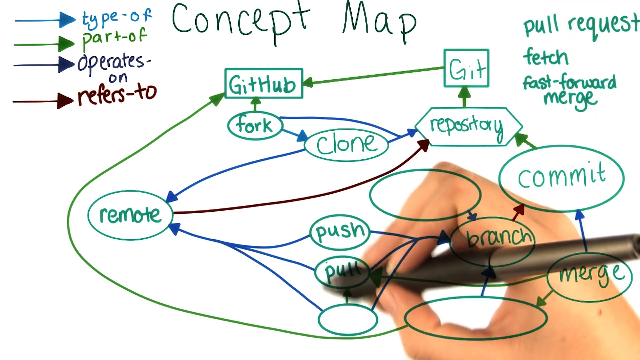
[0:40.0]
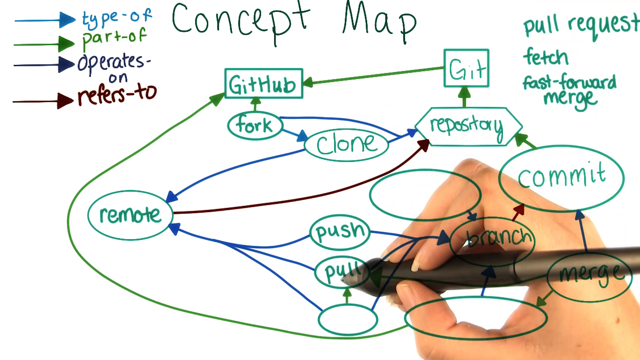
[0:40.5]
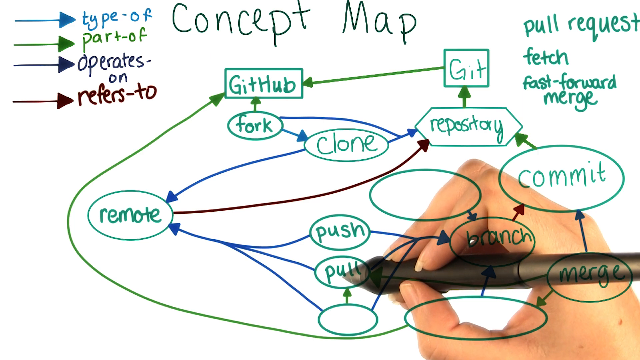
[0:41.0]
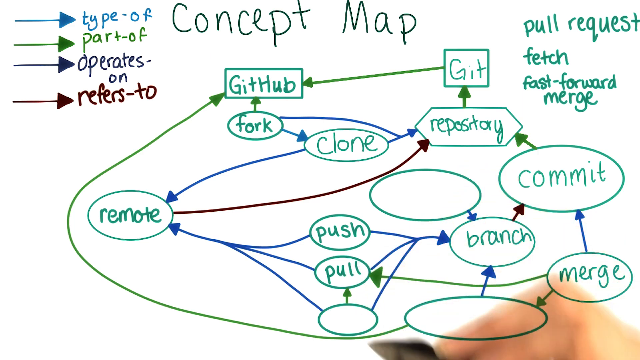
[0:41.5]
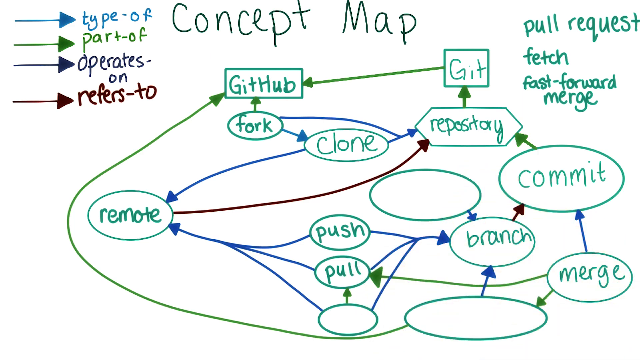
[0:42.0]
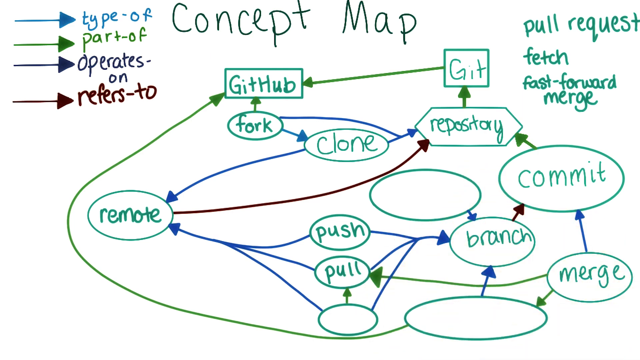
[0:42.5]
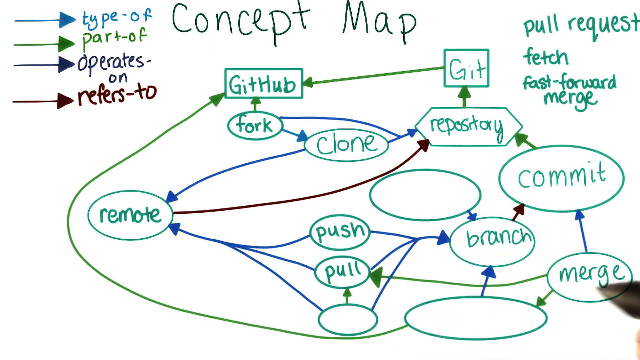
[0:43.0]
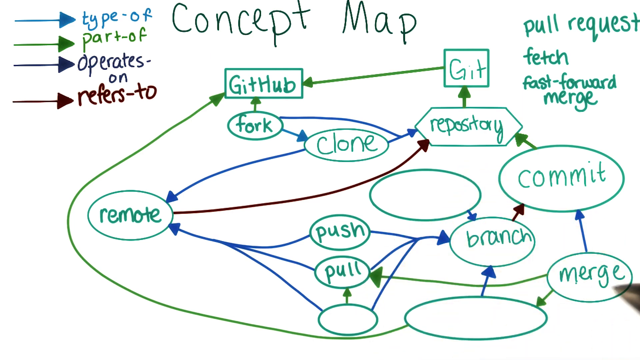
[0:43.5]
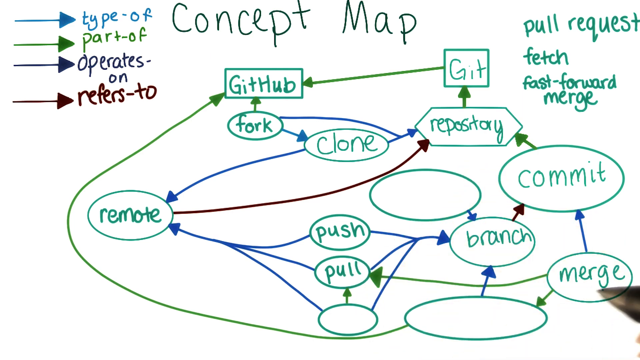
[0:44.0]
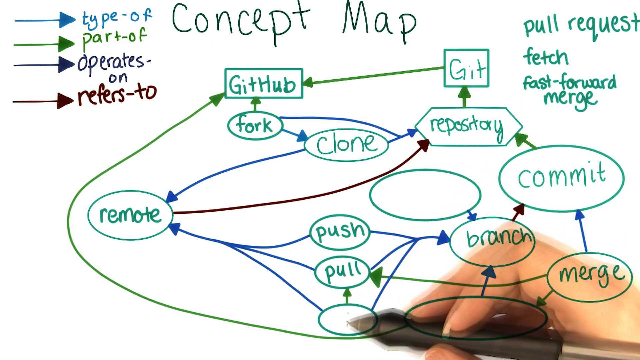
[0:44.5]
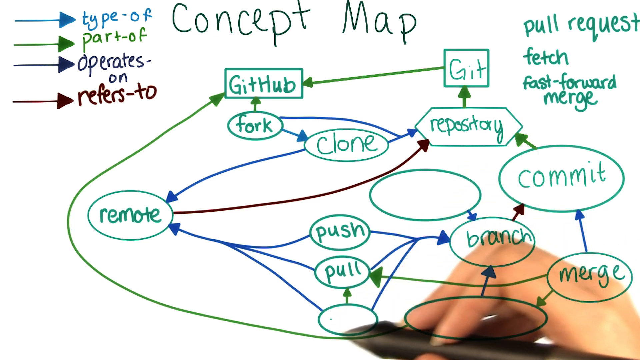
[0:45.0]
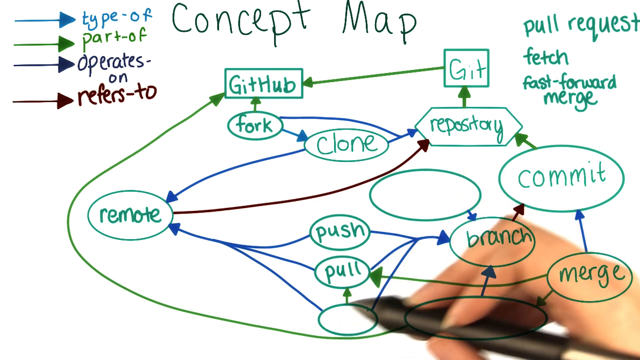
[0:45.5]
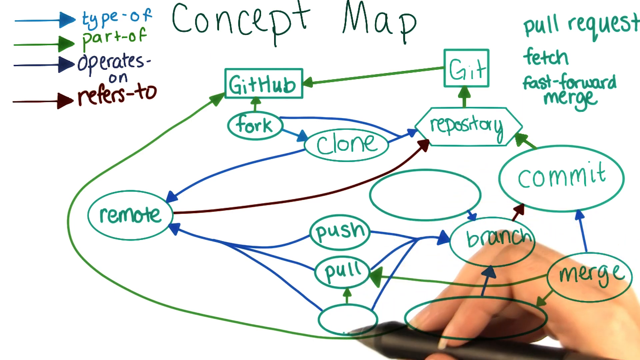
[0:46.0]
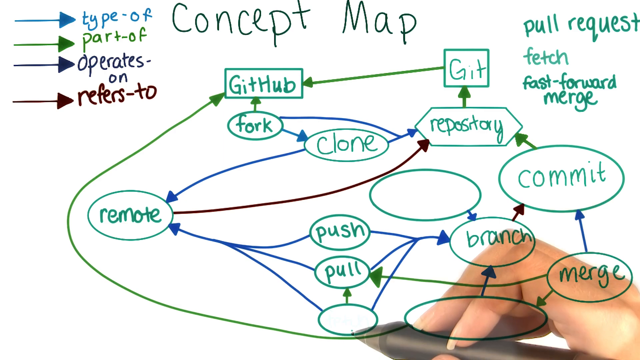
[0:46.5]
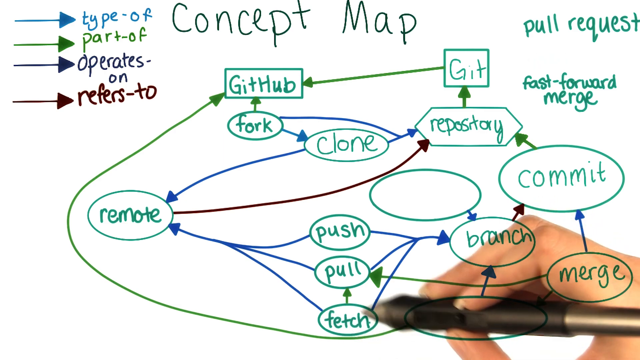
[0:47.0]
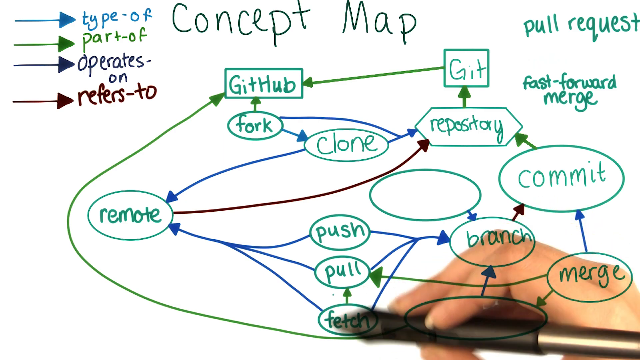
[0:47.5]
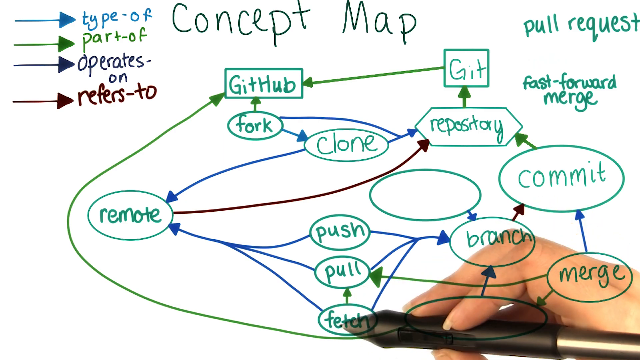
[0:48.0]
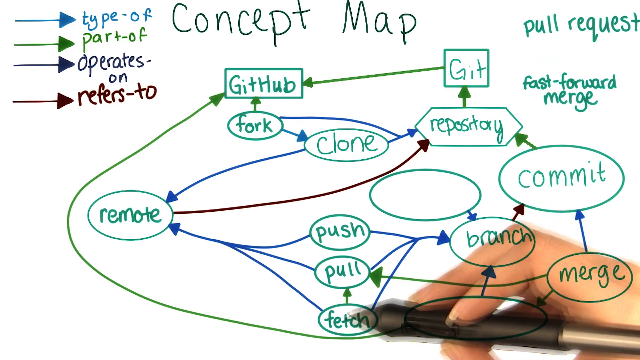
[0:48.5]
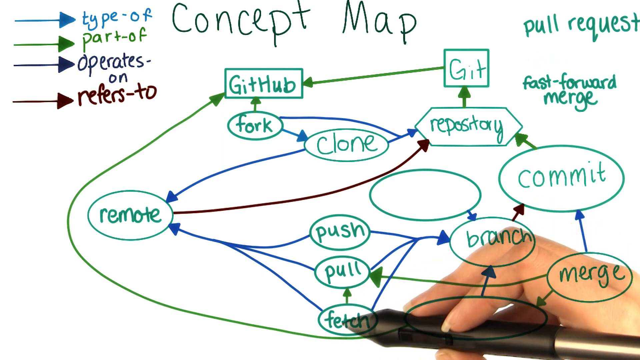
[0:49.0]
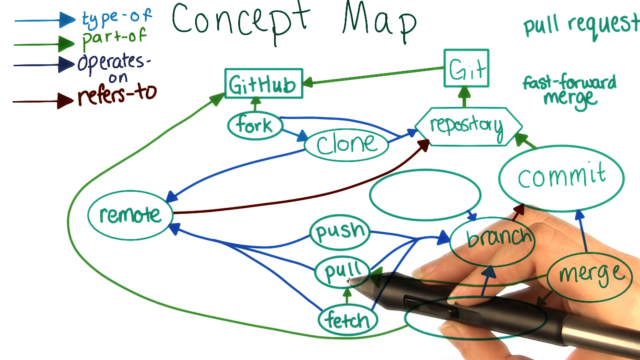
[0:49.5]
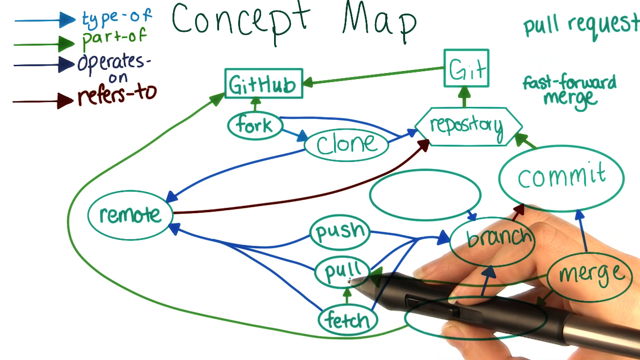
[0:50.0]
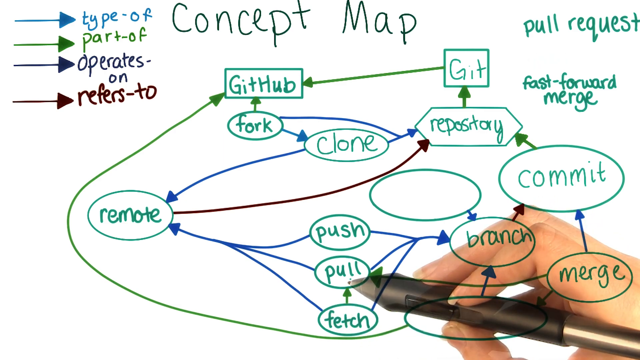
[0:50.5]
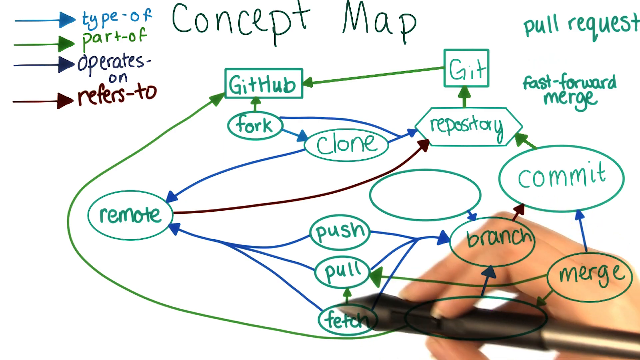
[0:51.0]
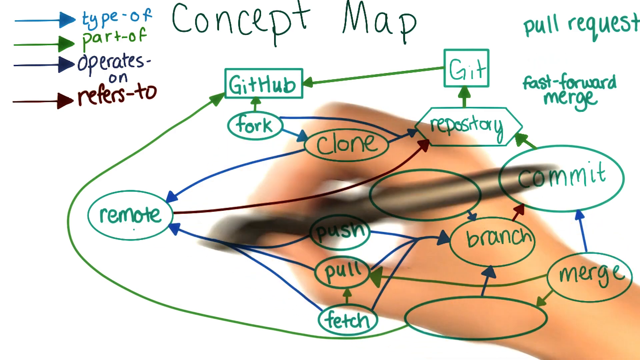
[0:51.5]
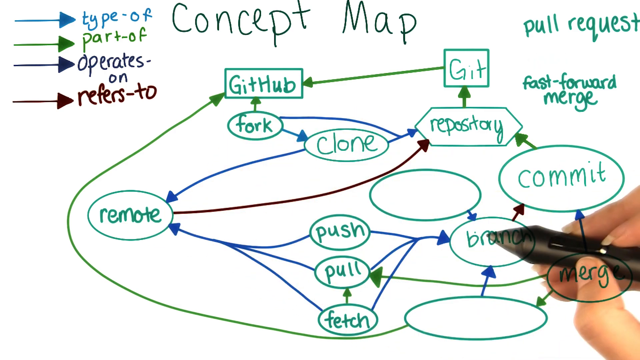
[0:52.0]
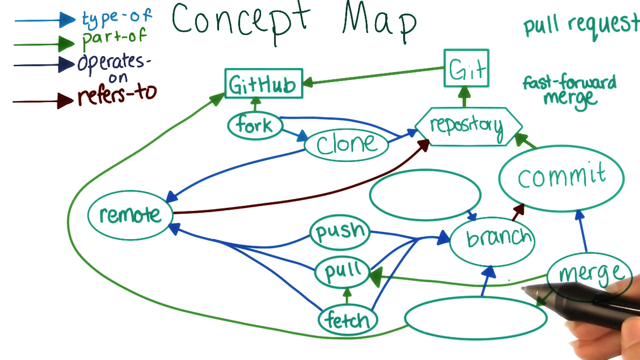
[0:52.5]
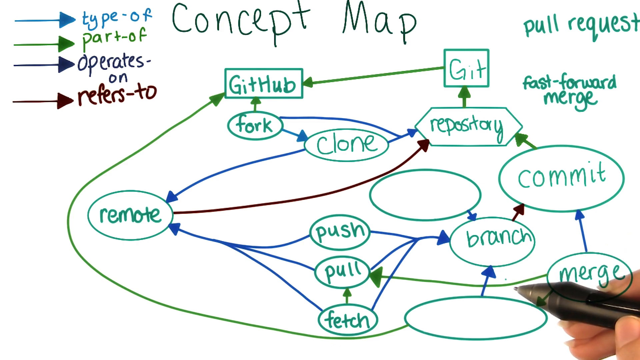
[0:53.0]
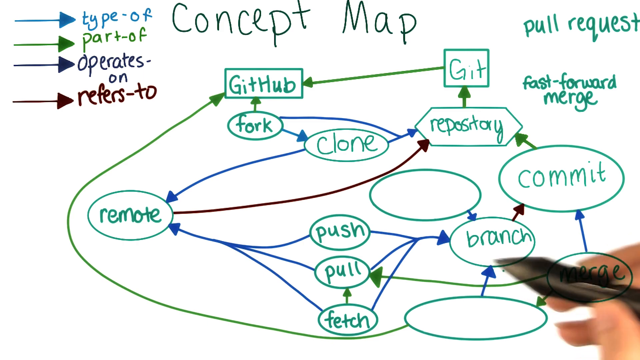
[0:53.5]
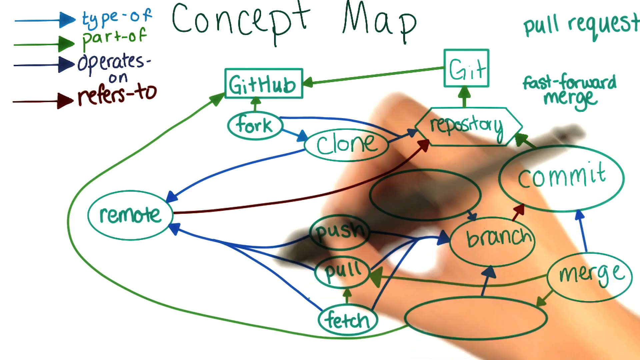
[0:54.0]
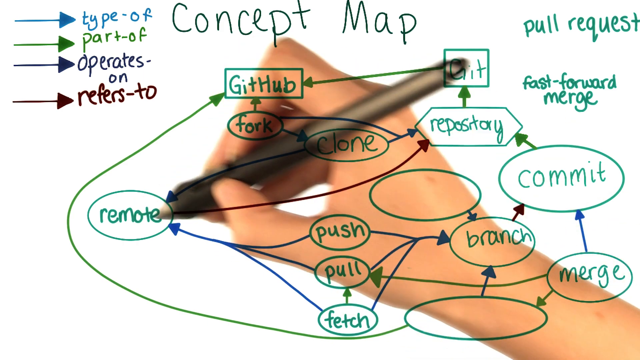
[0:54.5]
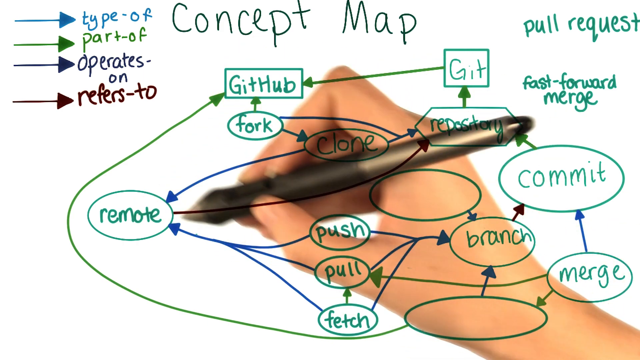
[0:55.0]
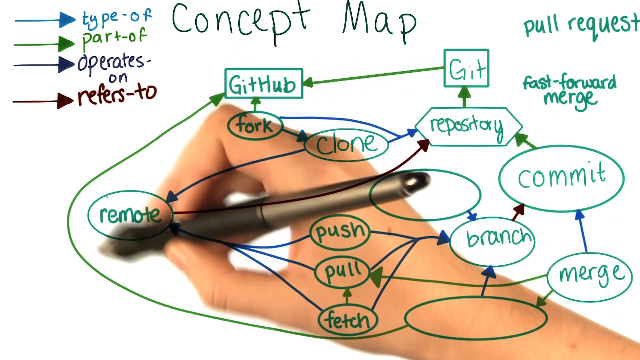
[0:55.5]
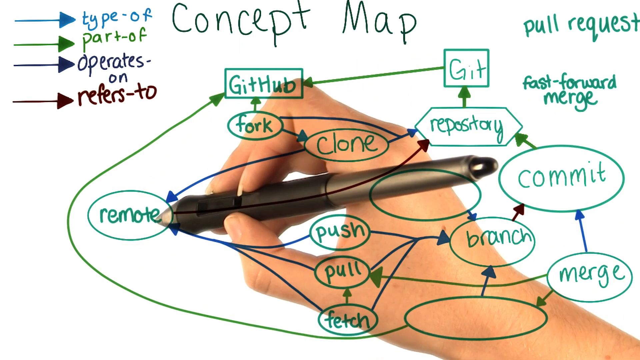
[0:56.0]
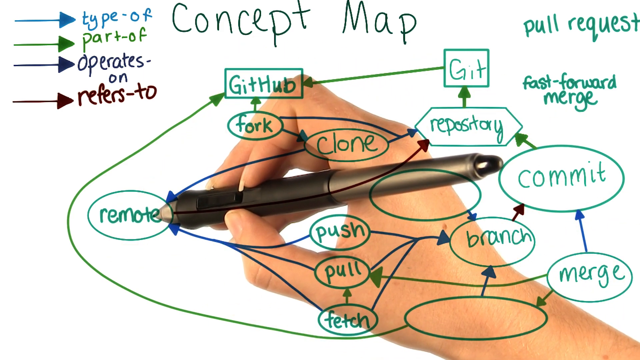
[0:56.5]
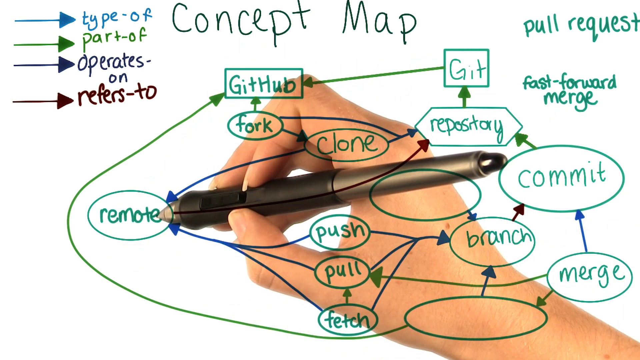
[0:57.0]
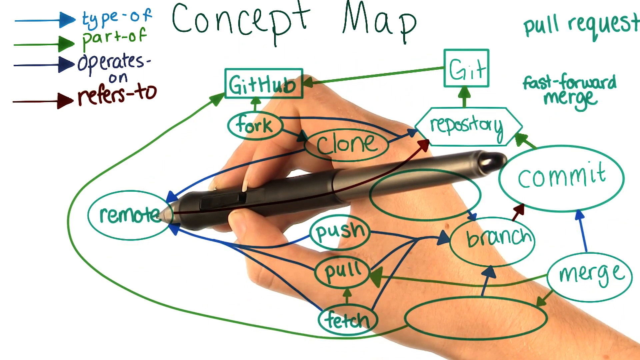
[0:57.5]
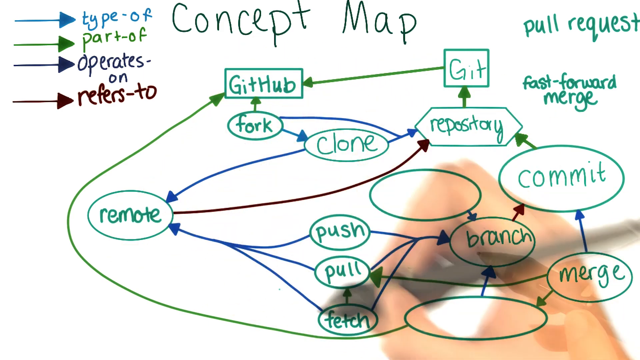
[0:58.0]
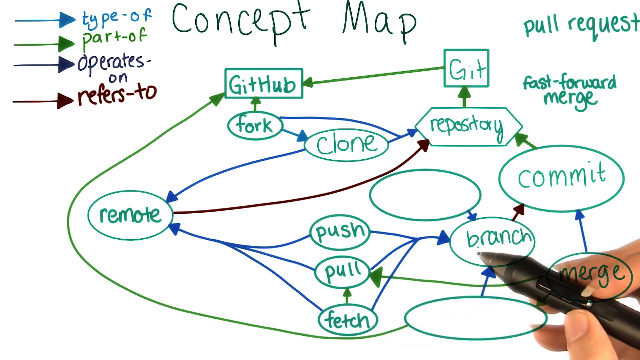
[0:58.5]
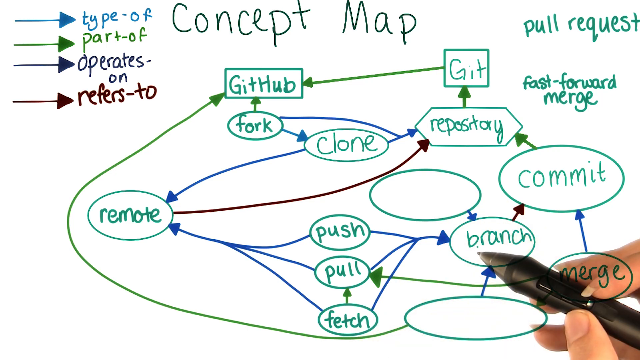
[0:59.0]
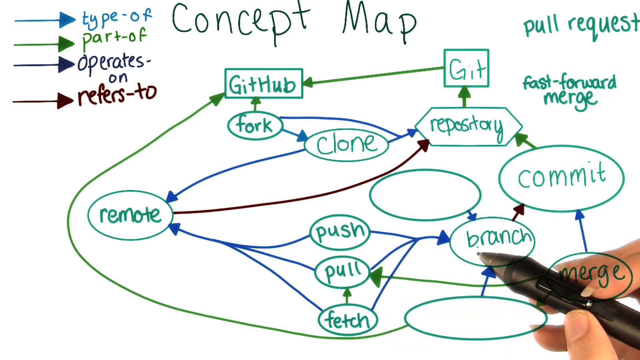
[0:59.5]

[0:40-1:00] A concept map is shown. On the right, "pull, request, fetch, fast forward, merge" appears in green. On the left are a blue arrow labeled "type of," a green arrow labeled "part of," a dark blue arrow labeled "operates on," and a brown arrow labeled "refers to." Words written on the chart include "github," "git," "fork," "clone," "repository," "commit," "remote," "push," "pull," "branch" and "merge," and there are three blank circles. The woman goes to a blank circle and the word "fetch" goes there; the connections run from fetch to pull and from pull to remote. She goes to a blank spot and "pull" is placed there, with three spots still left. She goes by one and the word "fetch" goes there, leaving two blank circles. She highlights "remote," or pretends to circle it, to show how it fits.